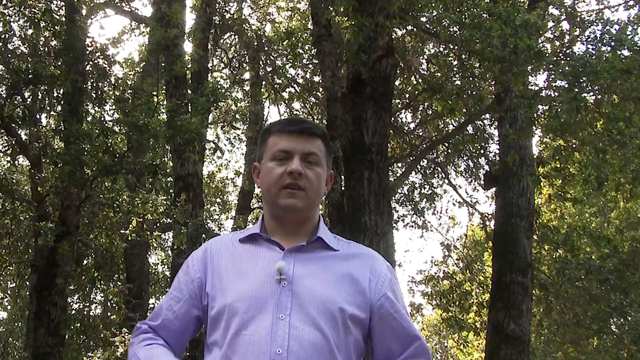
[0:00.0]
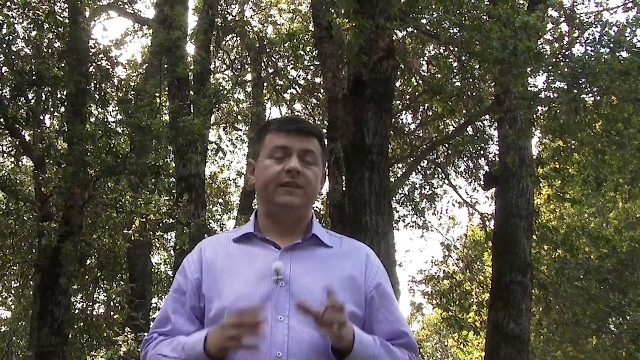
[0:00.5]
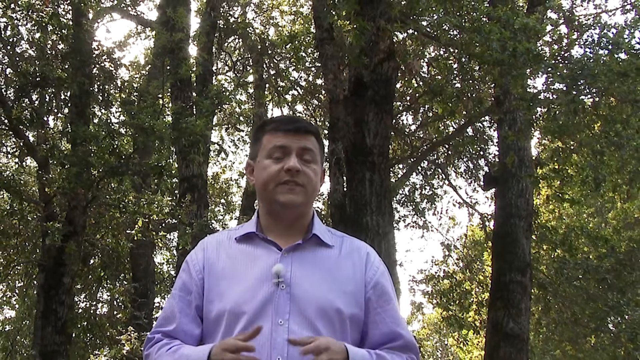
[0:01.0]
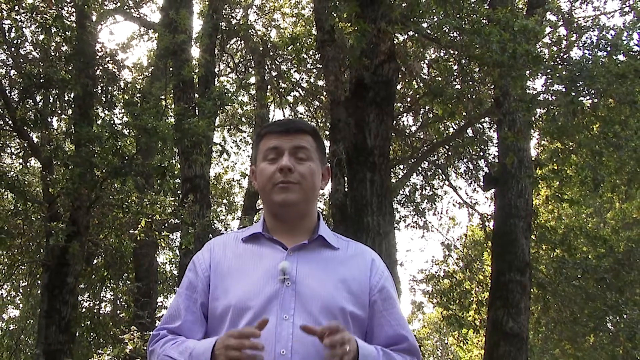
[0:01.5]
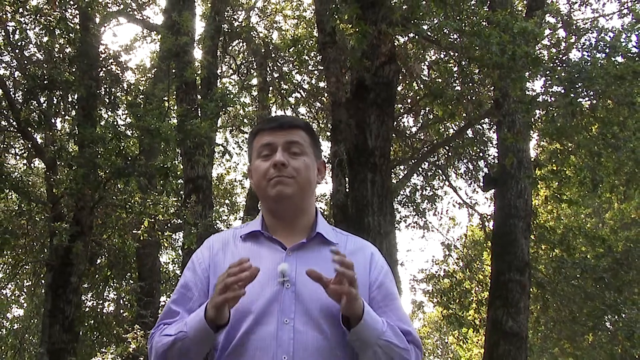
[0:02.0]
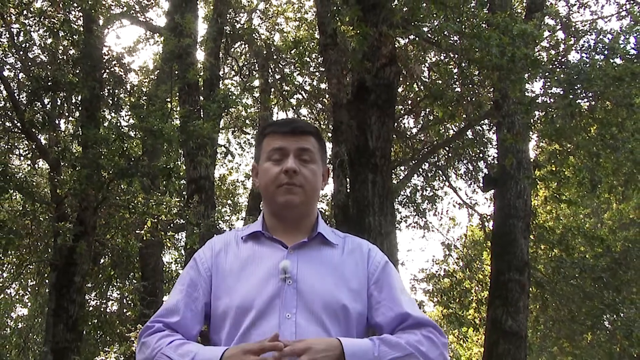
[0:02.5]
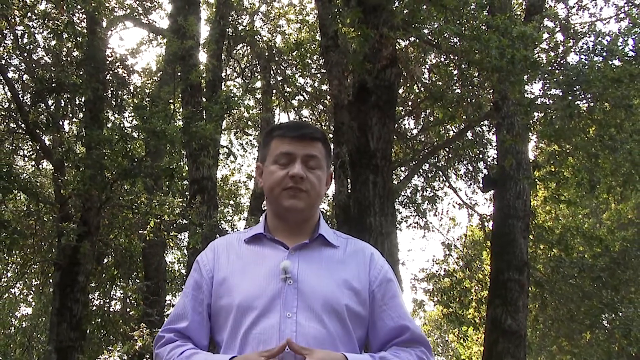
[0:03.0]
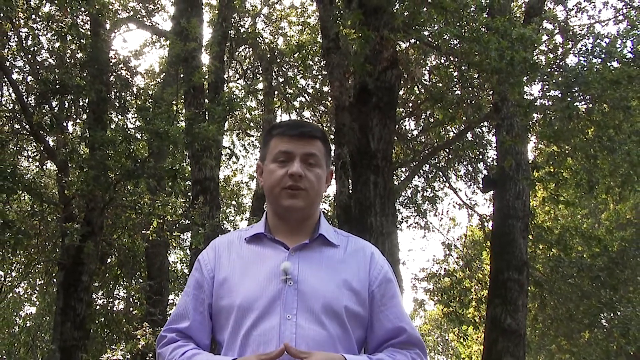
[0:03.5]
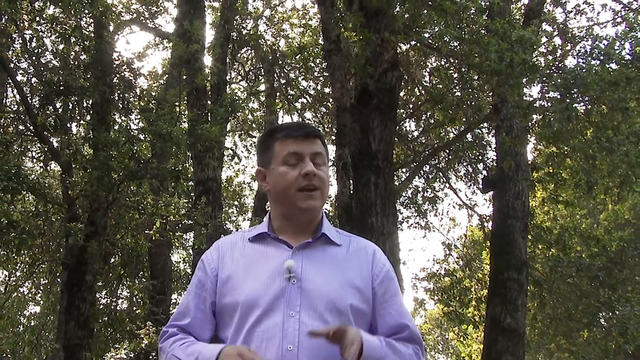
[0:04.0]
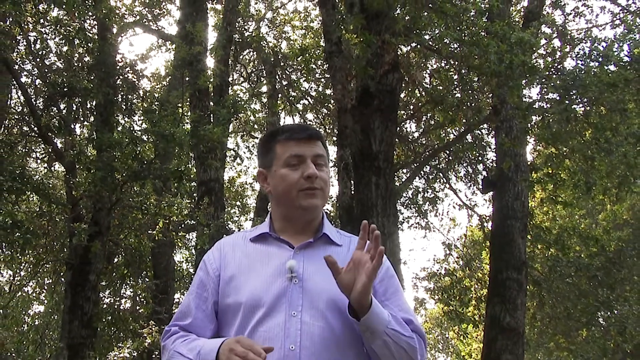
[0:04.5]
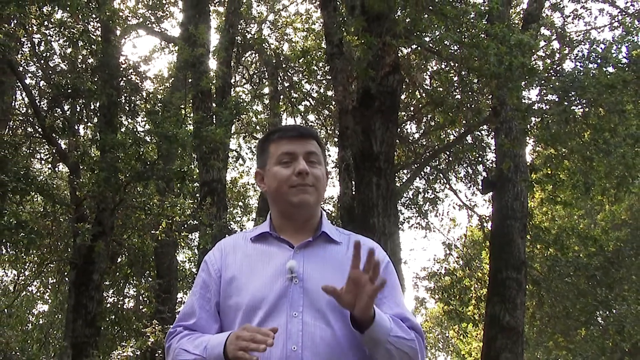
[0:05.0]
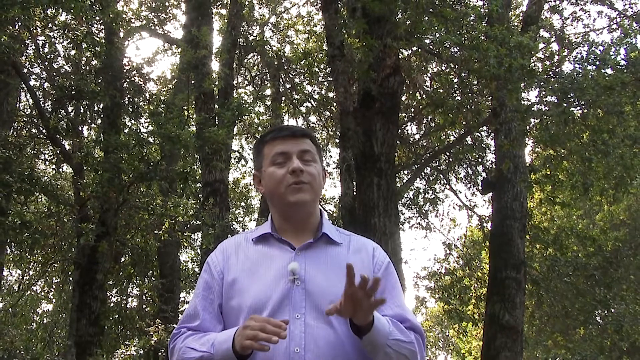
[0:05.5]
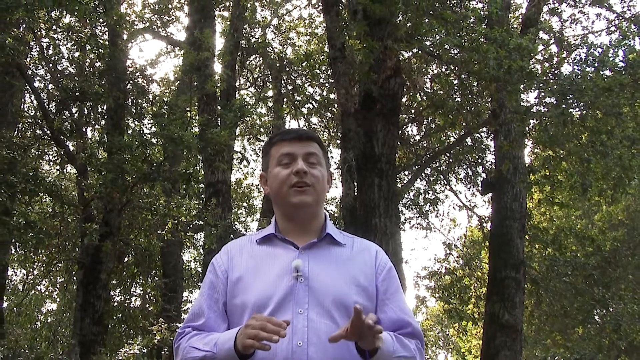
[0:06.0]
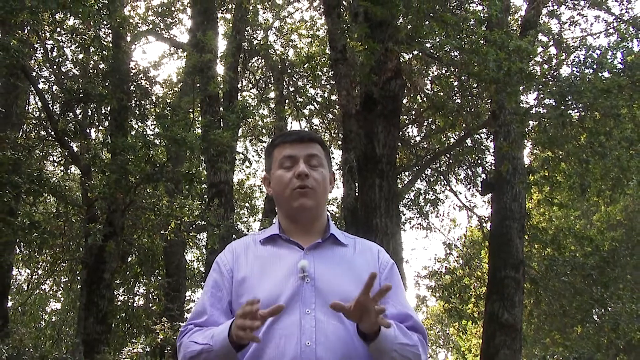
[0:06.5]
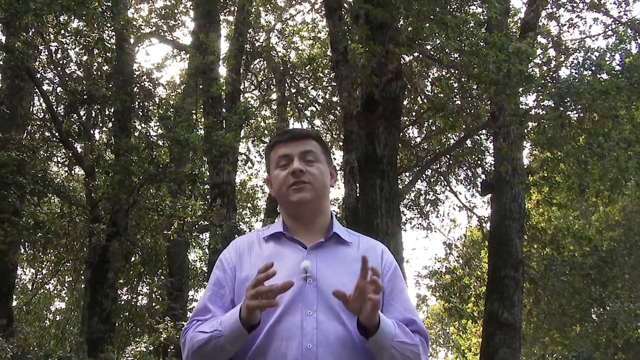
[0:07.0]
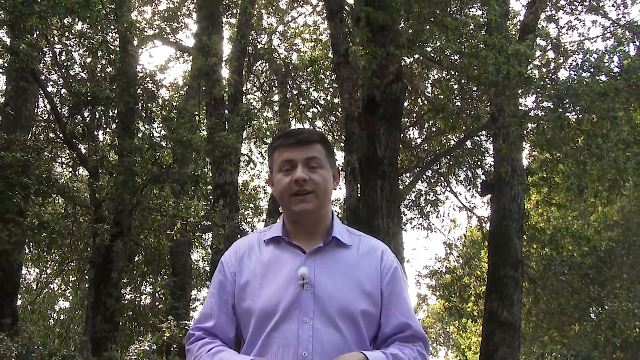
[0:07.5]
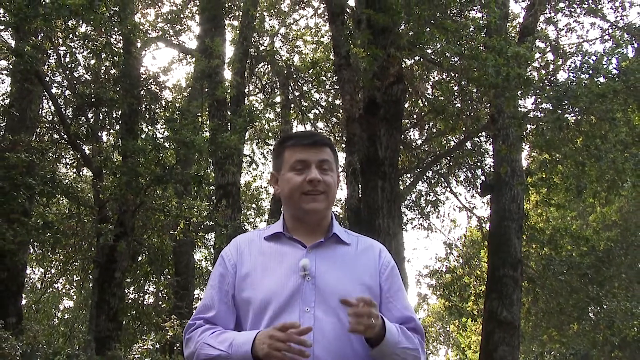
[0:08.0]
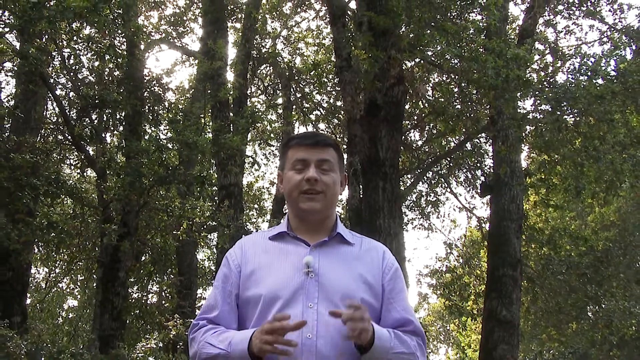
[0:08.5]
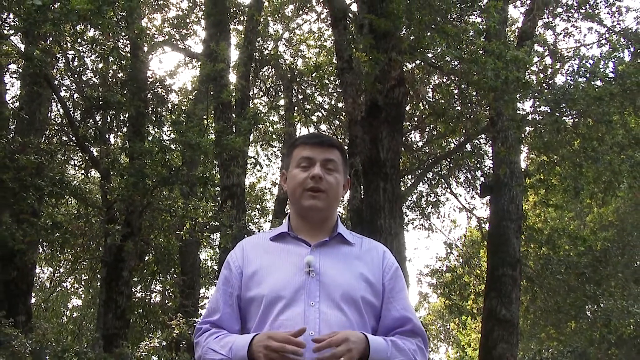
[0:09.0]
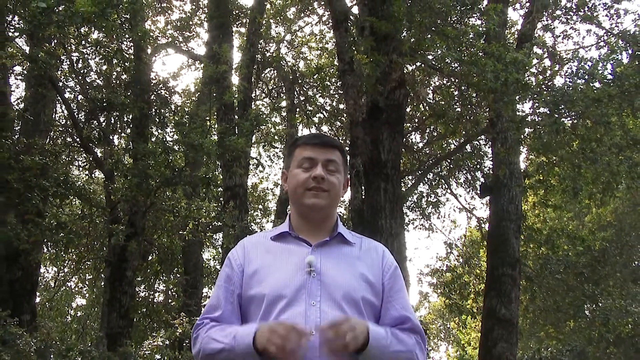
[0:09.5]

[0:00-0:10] A white middle-aged man with dark hair is shown from the waist up, wearing a light blue button-up dress shirt. Behind him is a dense forest with numerous trees and green foliage. He faces the camera and speaks directly to it. As he speaks, he brings both hands up to just below chest height and lowers them, then raises and lowers his left hand, then raises and lowers his right hand, and then brings both hands up again, accentuating his words. His head tilts slightly up and down as he talks.